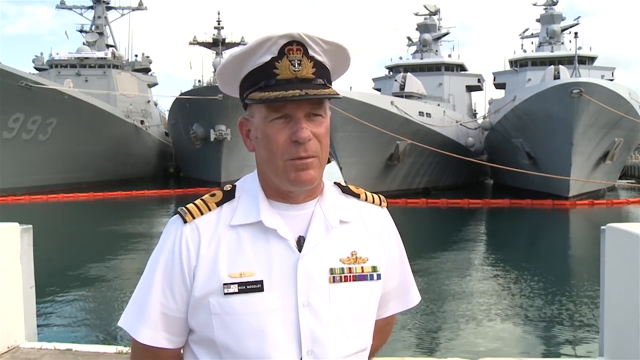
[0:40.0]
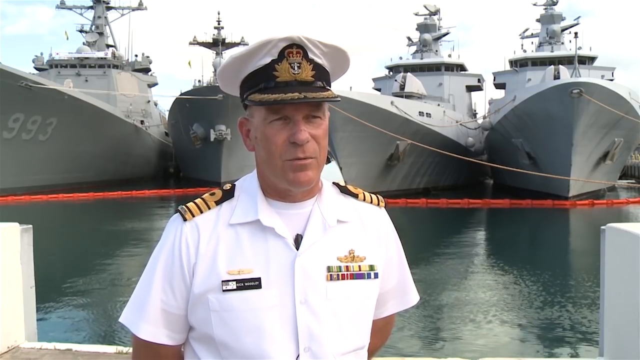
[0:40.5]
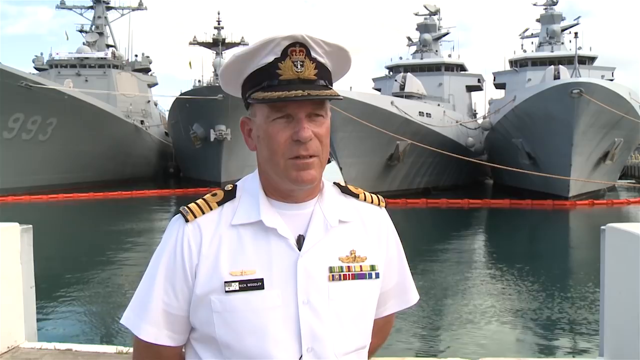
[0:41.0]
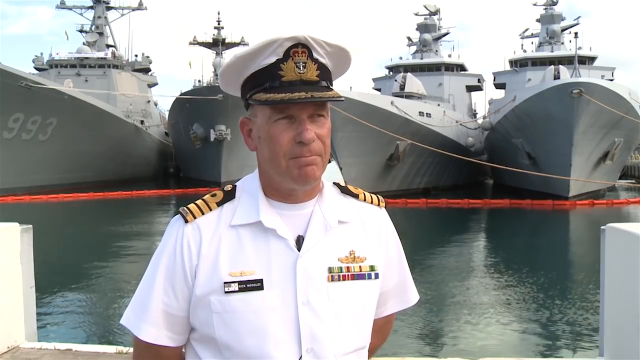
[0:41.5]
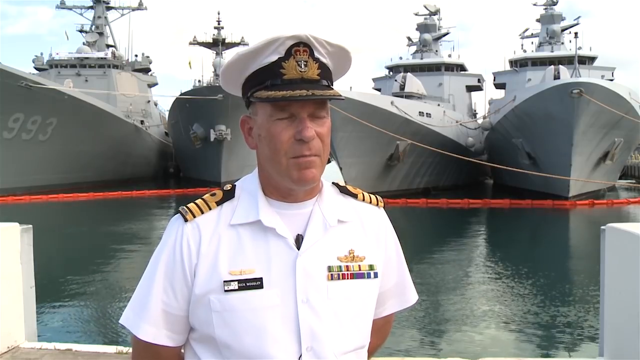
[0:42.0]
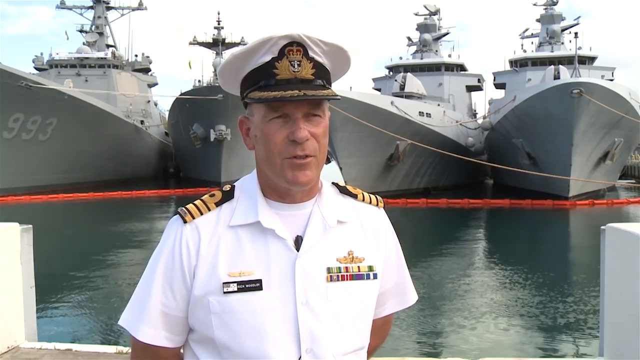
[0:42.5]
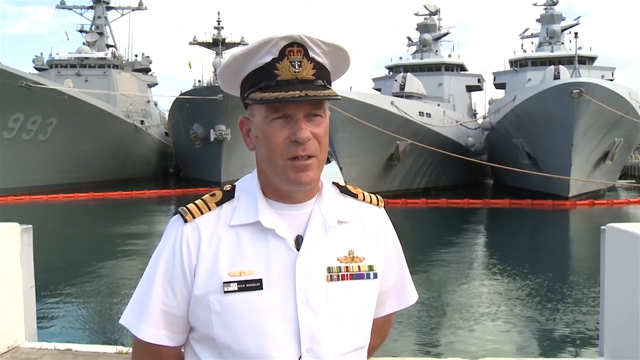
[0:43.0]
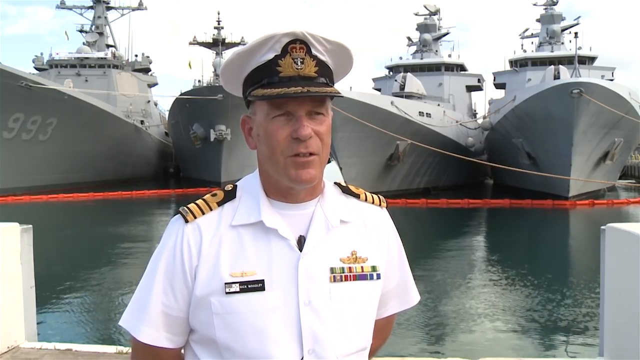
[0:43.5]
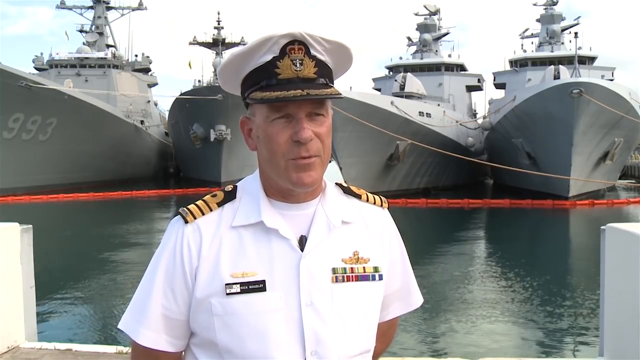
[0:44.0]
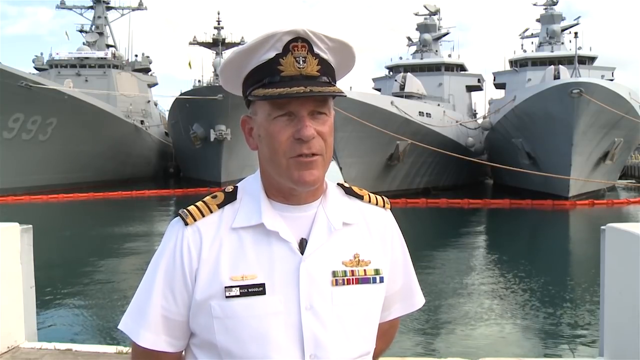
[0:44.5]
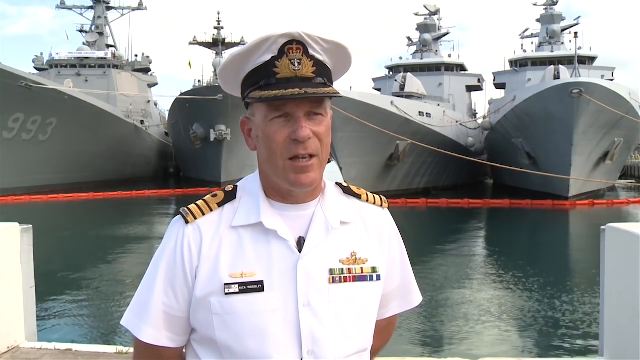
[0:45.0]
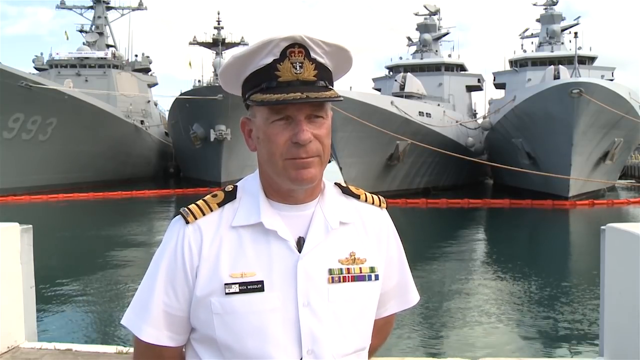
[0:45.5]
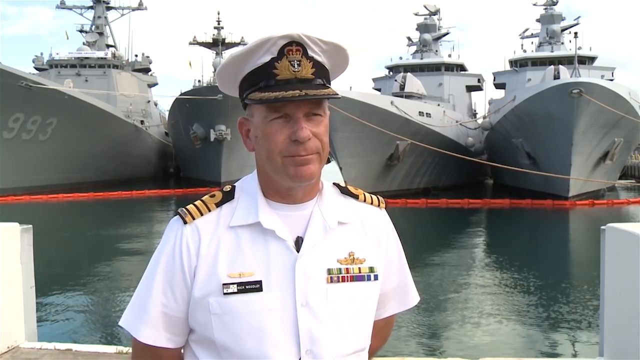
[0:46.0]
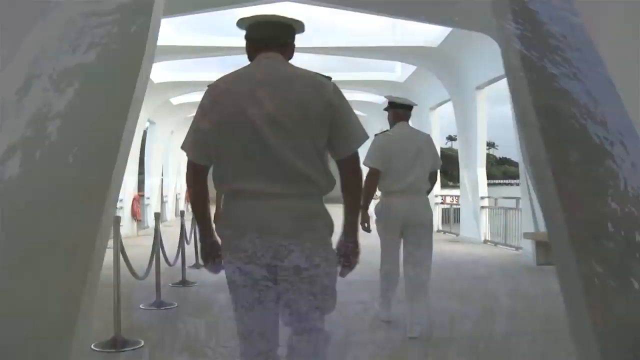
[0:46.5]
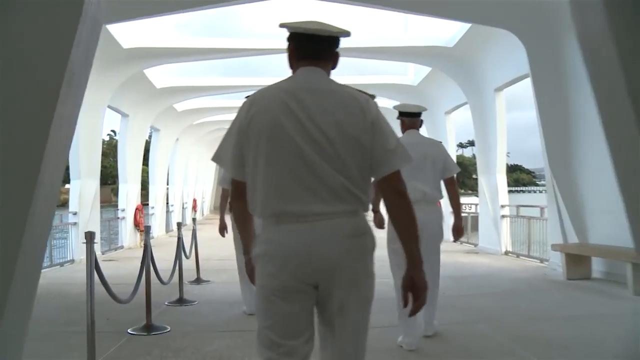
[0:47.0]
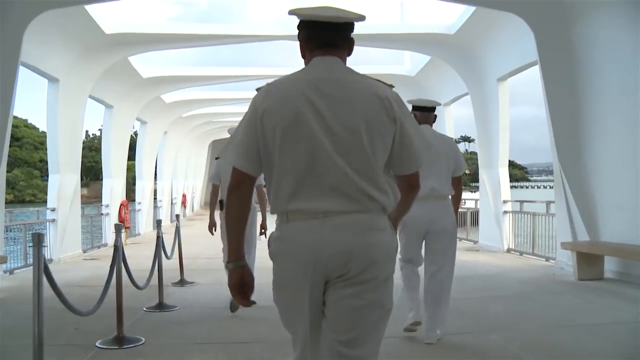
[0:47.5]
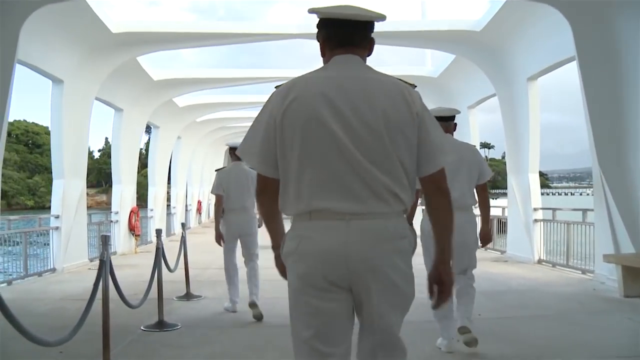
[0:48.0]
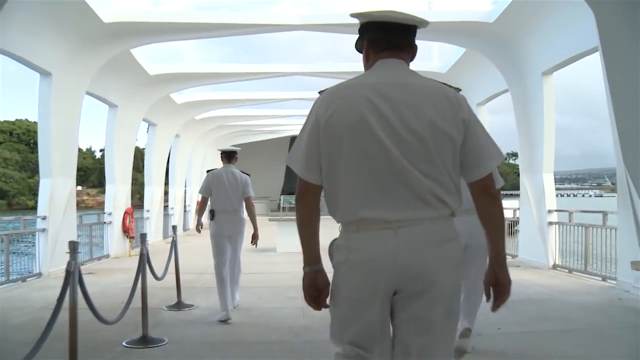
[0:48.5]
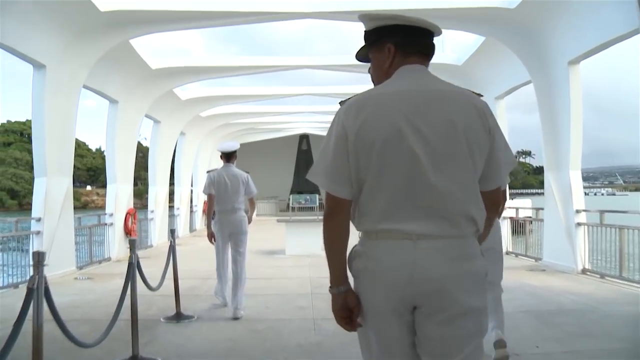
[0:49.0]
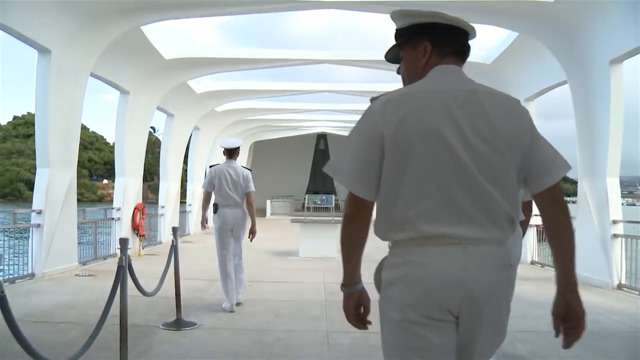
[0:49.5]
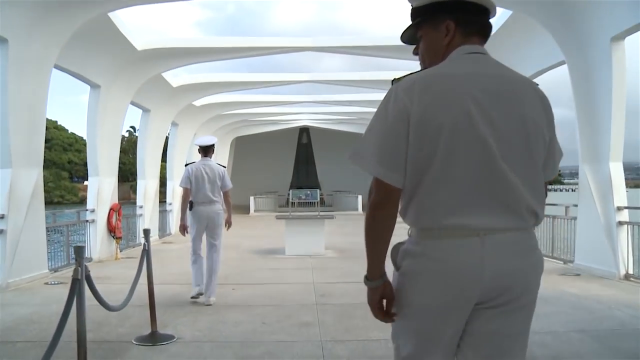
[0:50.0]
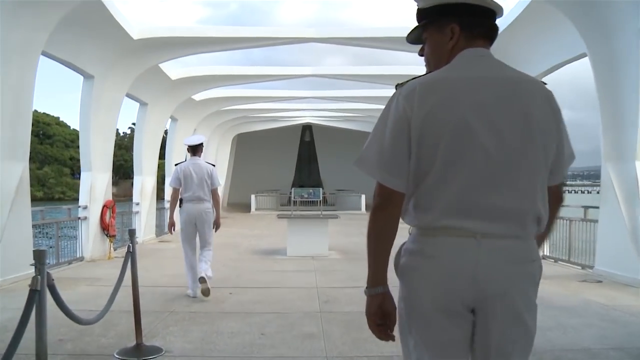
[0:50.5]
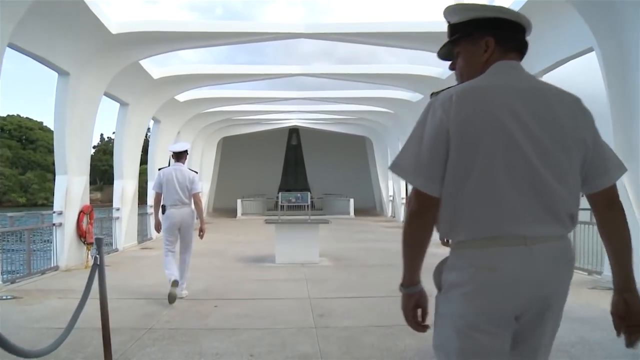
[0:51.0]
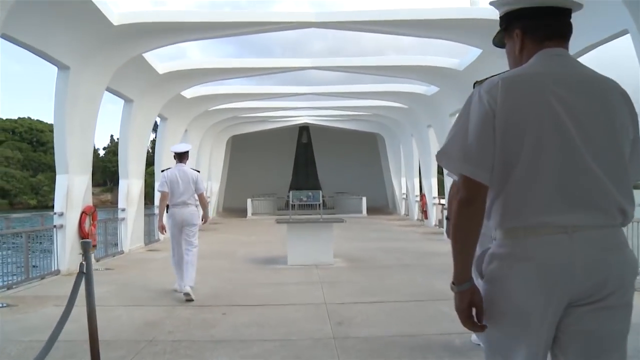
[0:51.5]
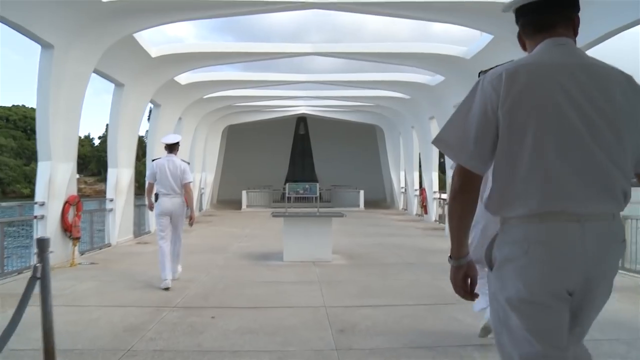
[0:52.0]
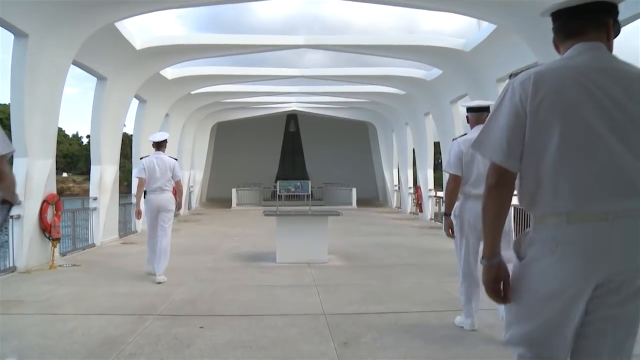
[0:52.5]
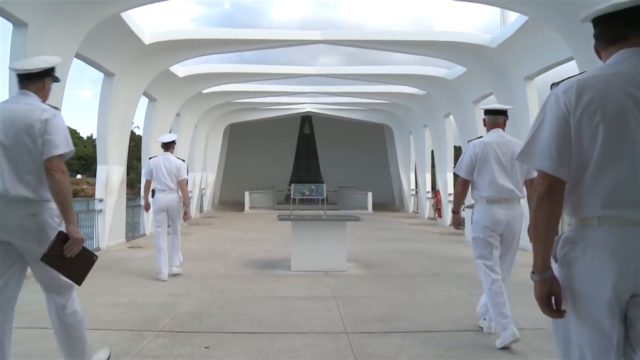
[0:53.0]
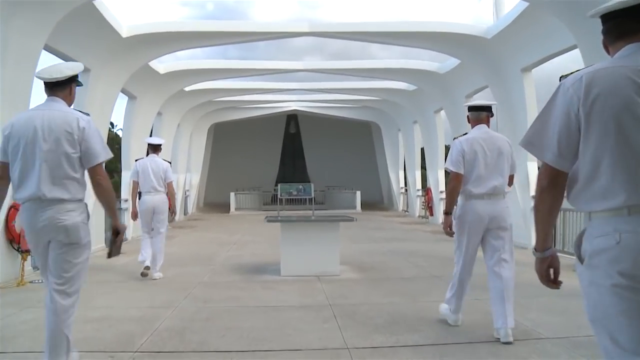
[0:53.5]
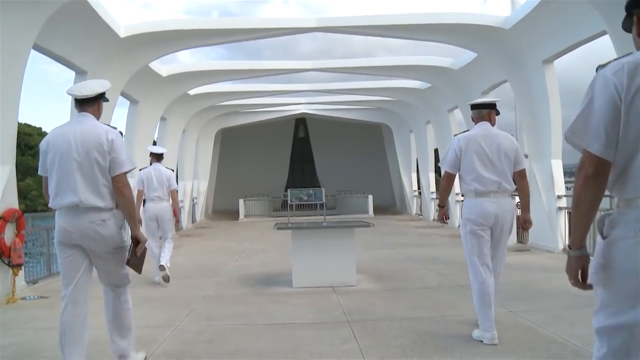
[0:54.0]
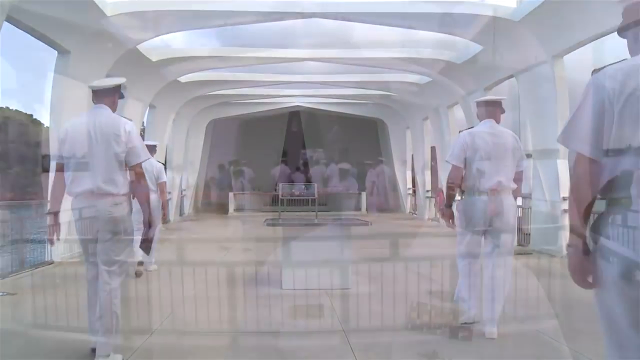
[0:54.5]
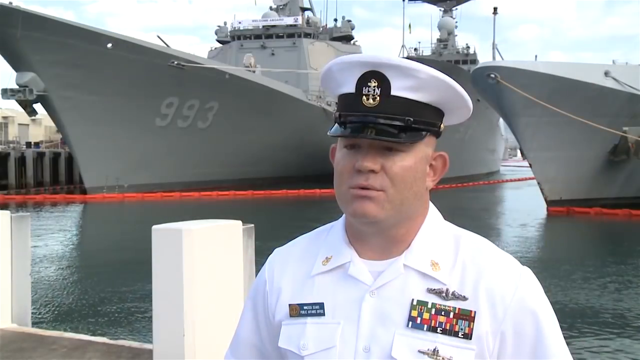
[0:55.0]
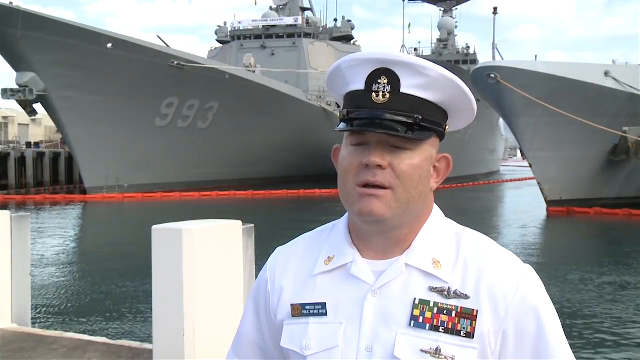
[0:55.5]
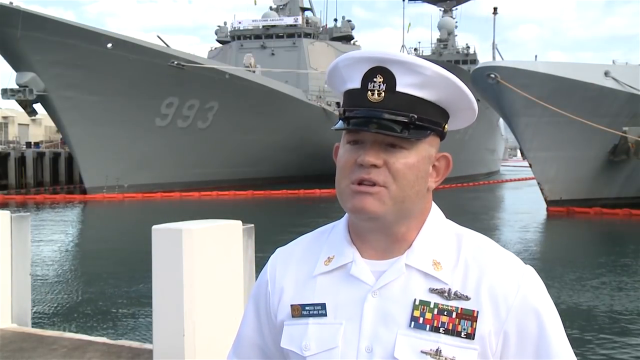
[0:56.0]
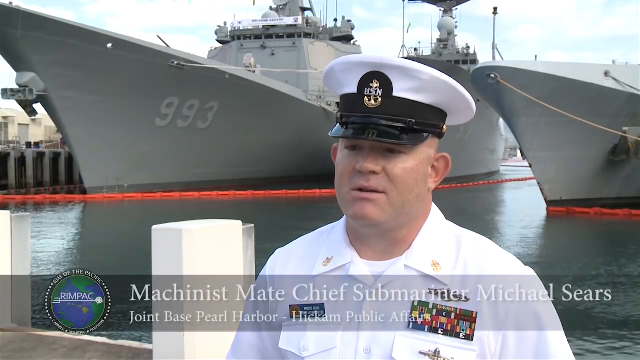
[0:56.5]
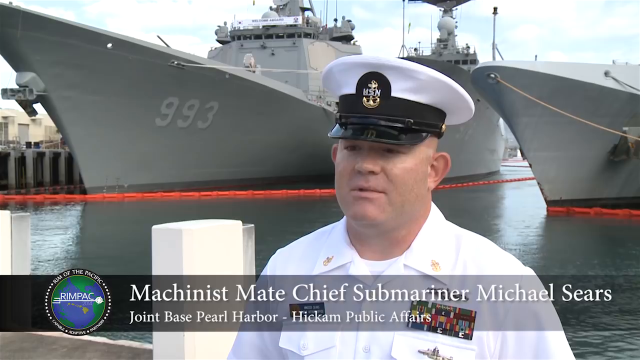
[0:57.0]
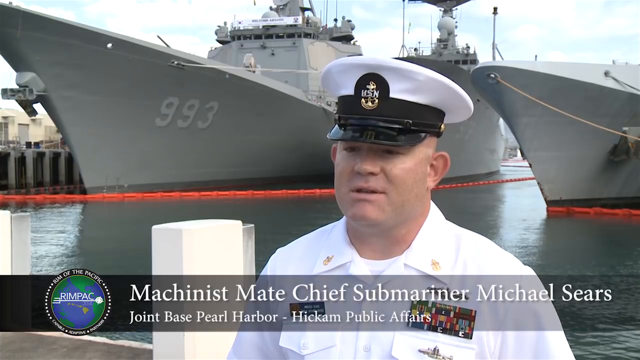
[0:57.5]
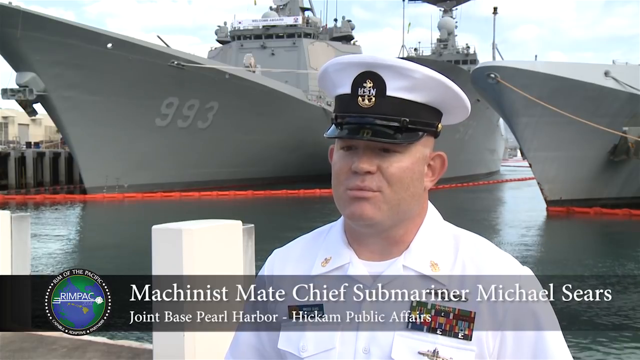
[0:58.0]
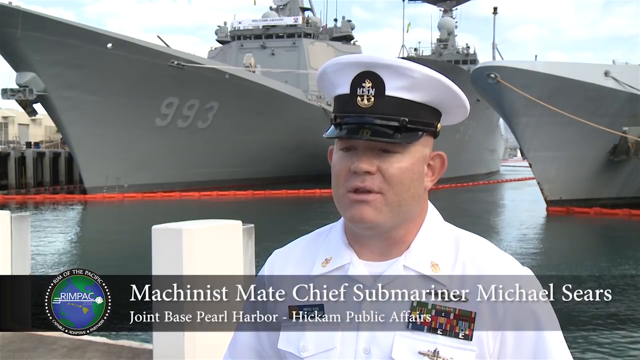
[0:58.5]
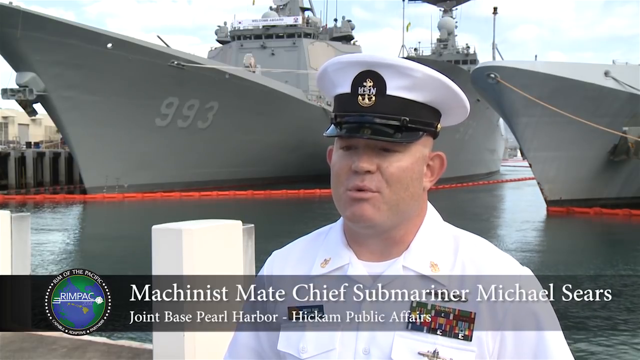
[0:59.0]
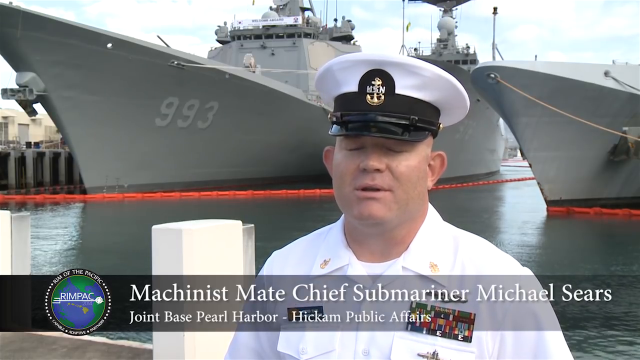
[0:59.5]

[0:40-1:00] The captain continues speaking to the camera. Two servicemen or women come into frame, walking away from the camera at a slow, steady pace, one about 10 feet in front of the other. Two more then come into frame, also wearing the white uniform and walking slowly and calmly. Another serviceman then speaks to the camera; he has fewer ornate medals, with none on his shoulders but some on his chest, suggesting he may be of lower rank. The location appears to be next to water, possibly indicating a naval branch of the Australian military.